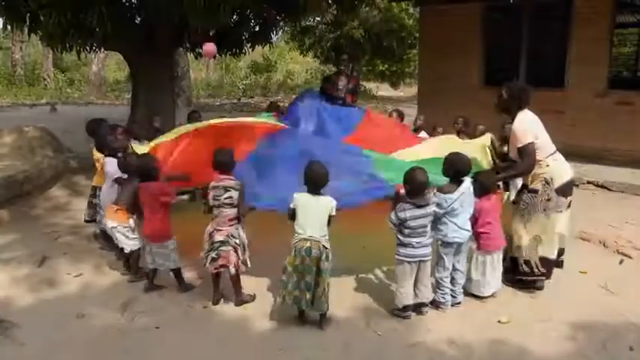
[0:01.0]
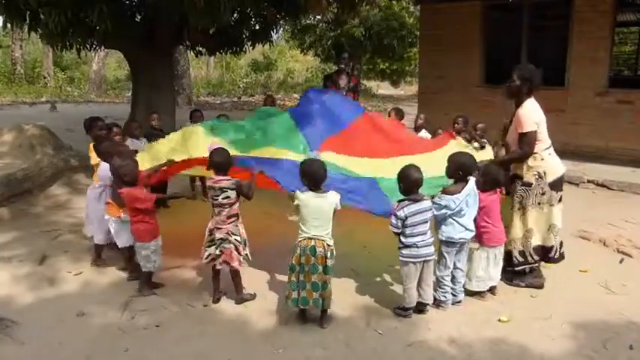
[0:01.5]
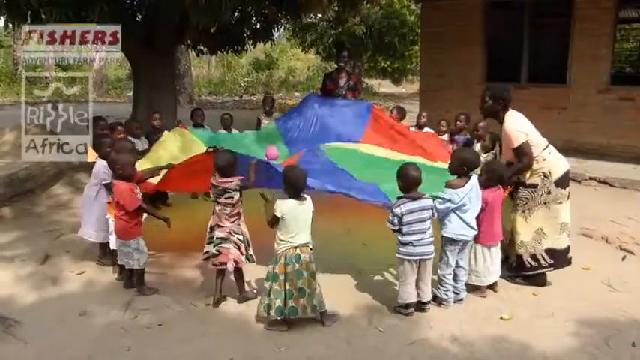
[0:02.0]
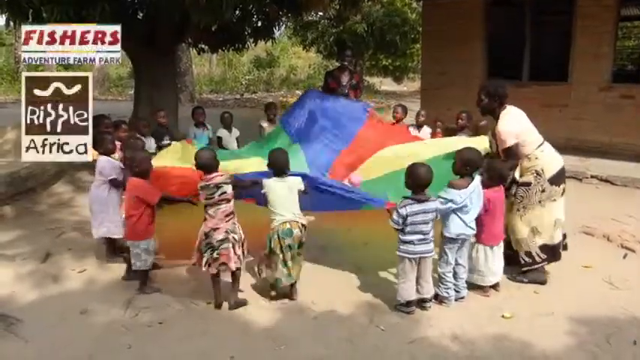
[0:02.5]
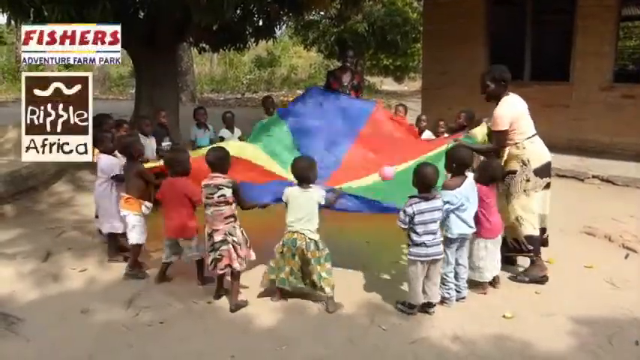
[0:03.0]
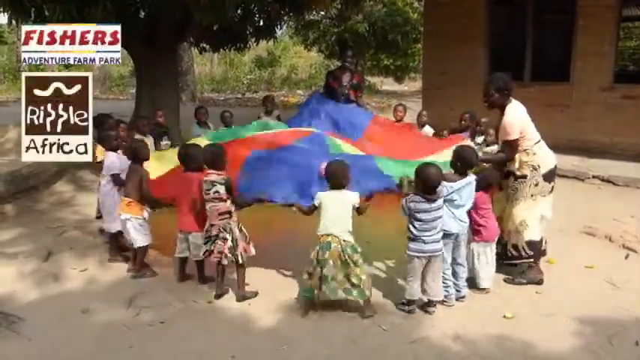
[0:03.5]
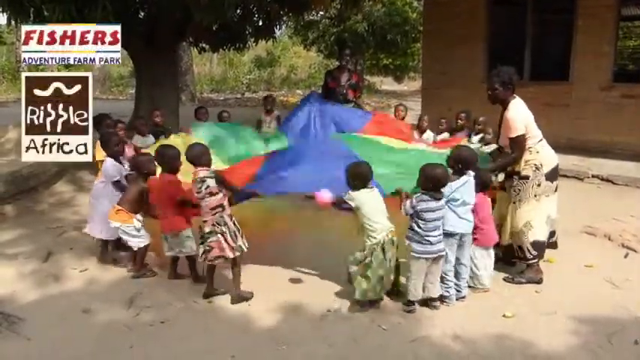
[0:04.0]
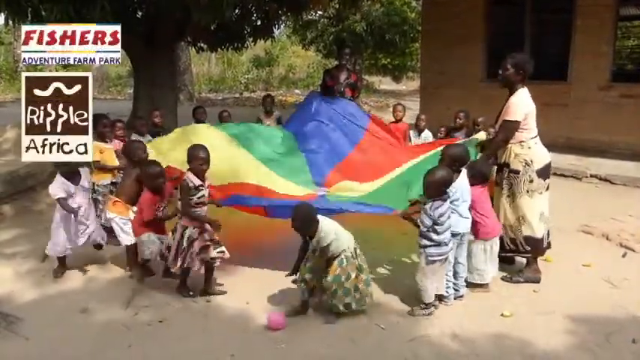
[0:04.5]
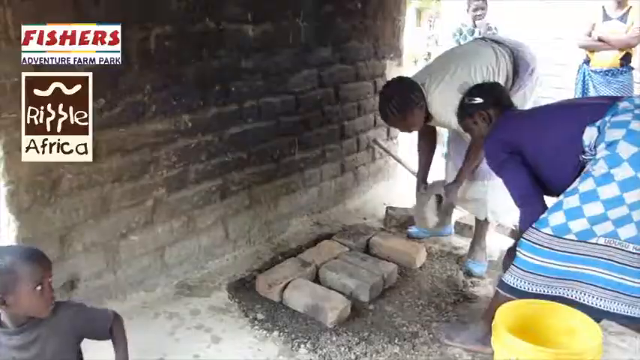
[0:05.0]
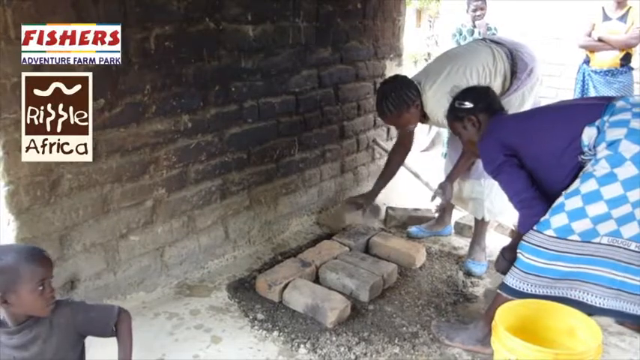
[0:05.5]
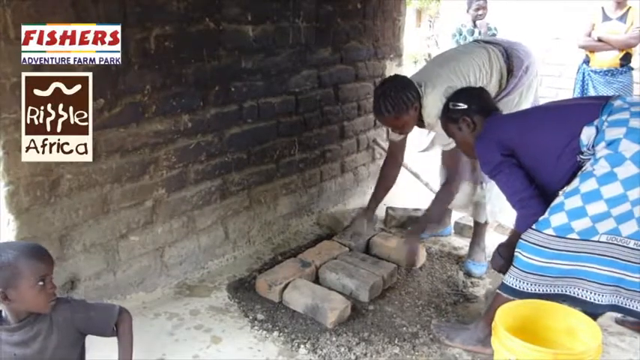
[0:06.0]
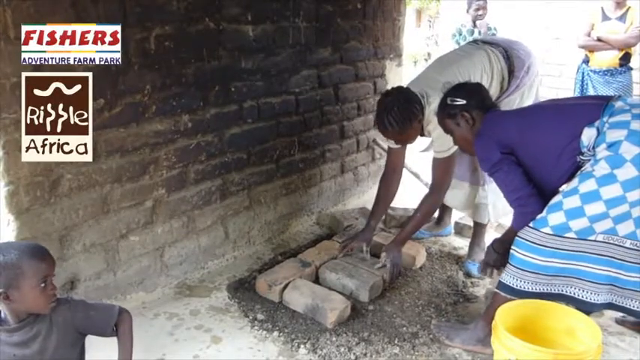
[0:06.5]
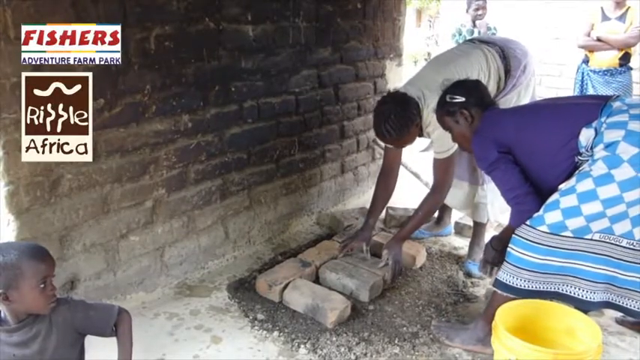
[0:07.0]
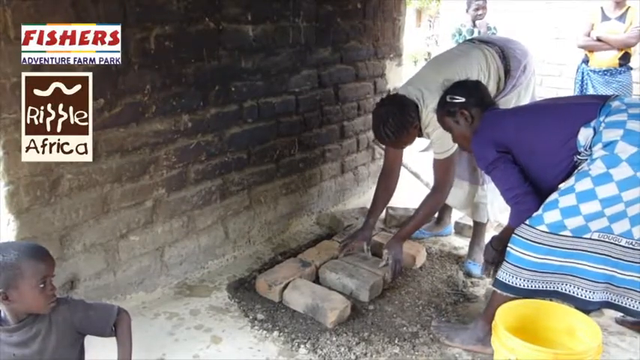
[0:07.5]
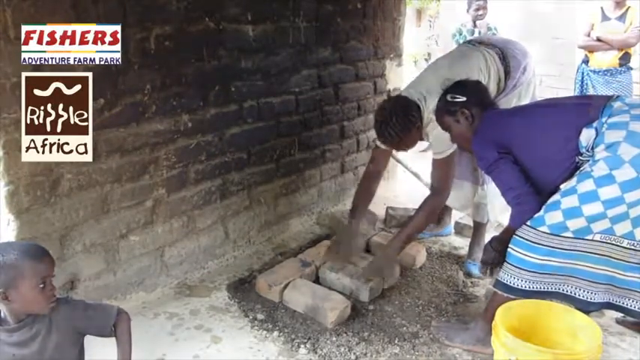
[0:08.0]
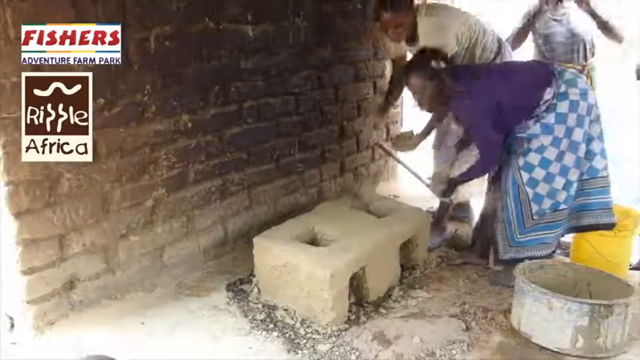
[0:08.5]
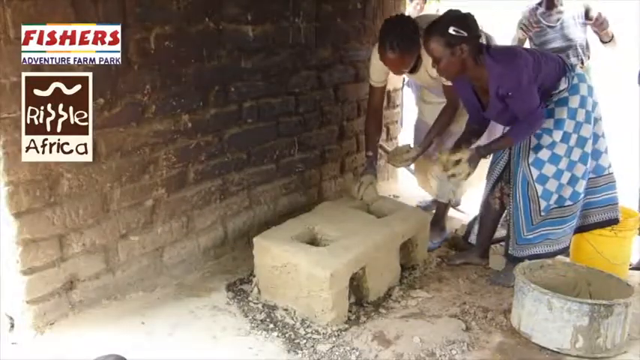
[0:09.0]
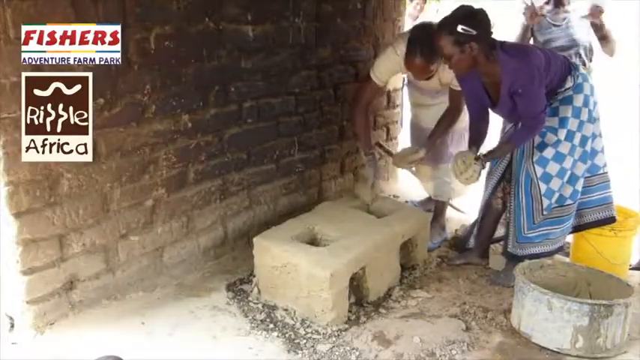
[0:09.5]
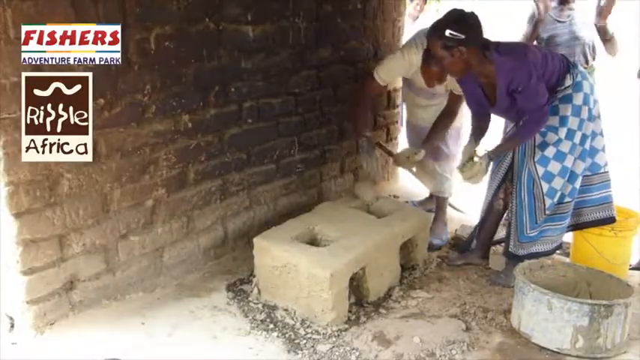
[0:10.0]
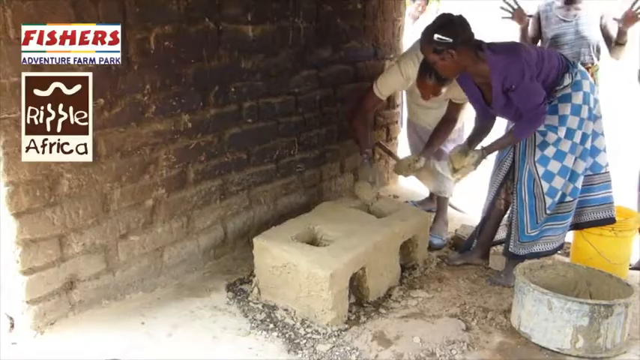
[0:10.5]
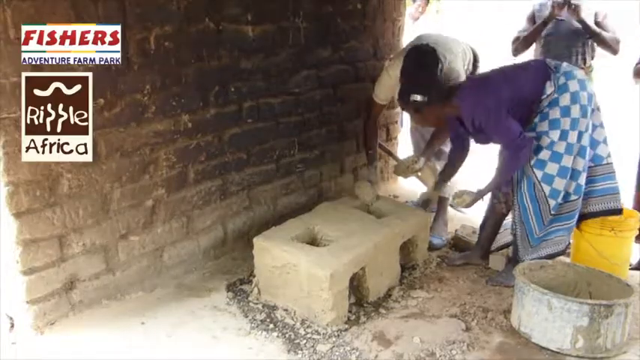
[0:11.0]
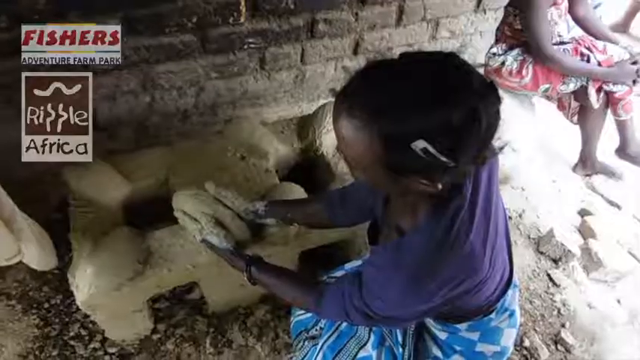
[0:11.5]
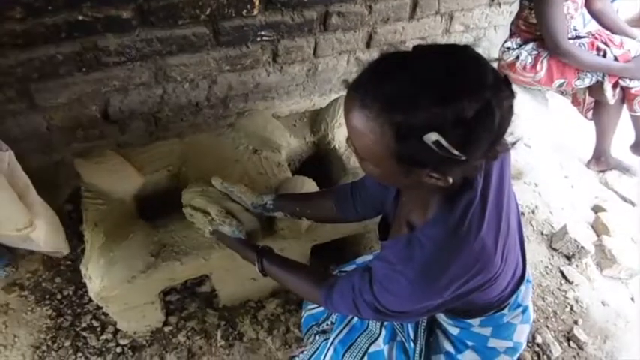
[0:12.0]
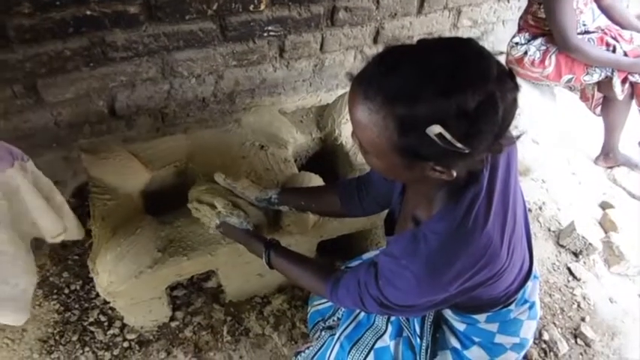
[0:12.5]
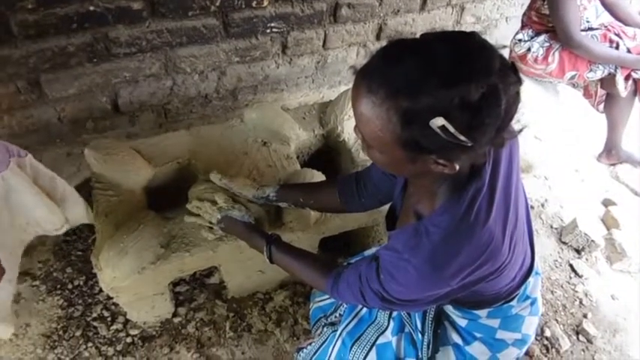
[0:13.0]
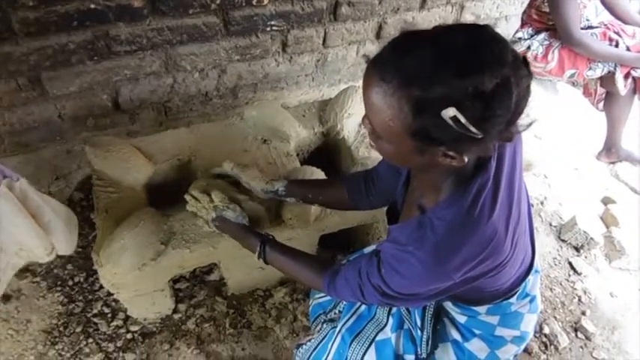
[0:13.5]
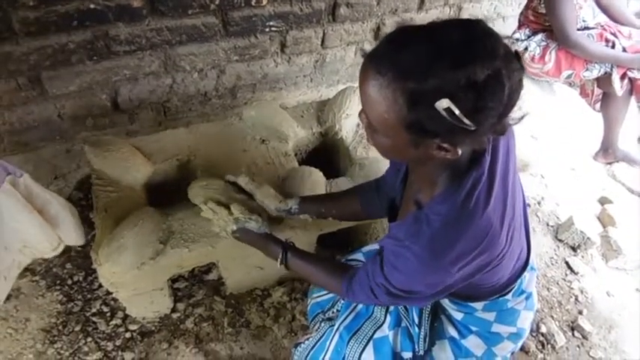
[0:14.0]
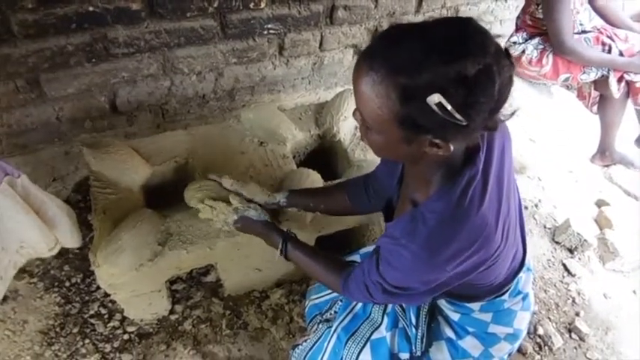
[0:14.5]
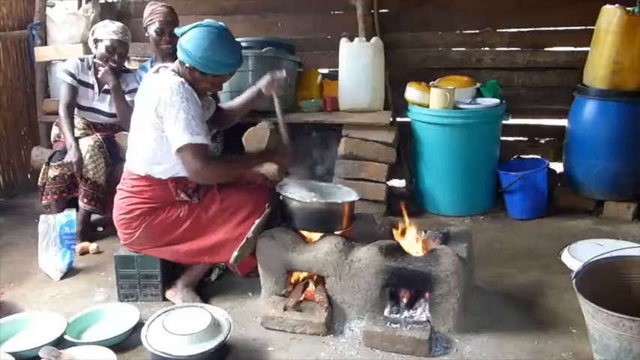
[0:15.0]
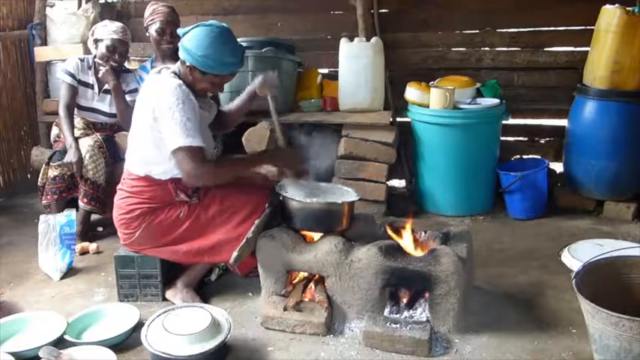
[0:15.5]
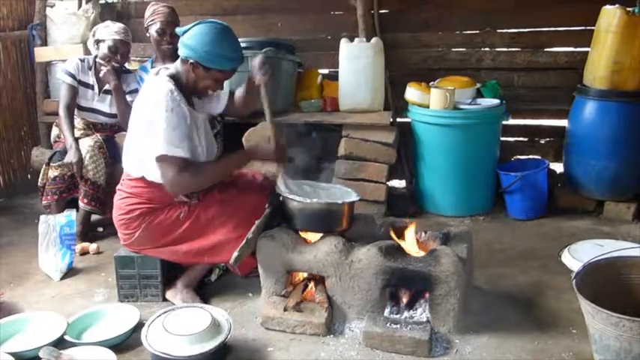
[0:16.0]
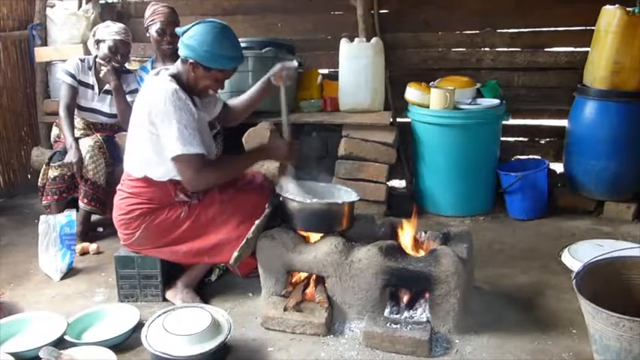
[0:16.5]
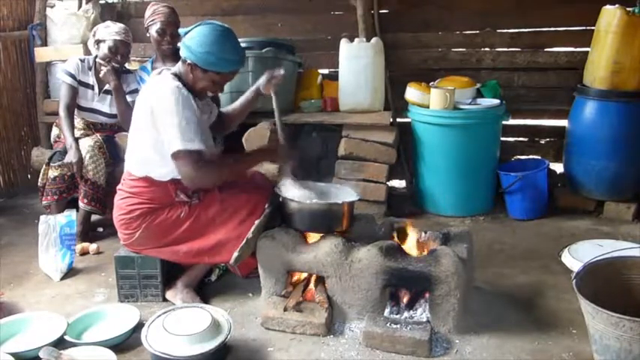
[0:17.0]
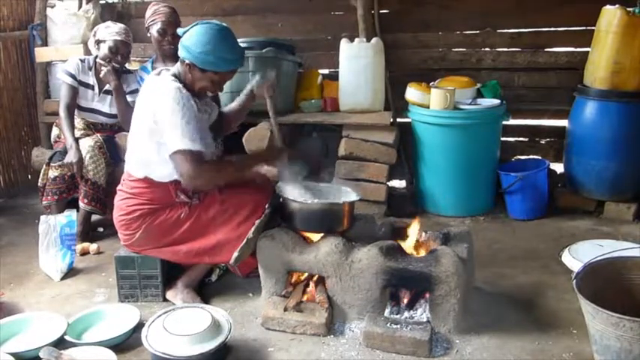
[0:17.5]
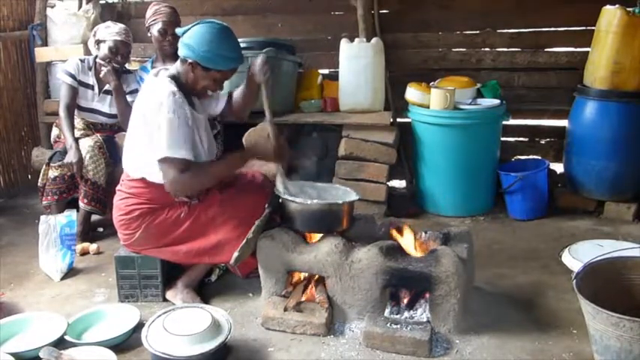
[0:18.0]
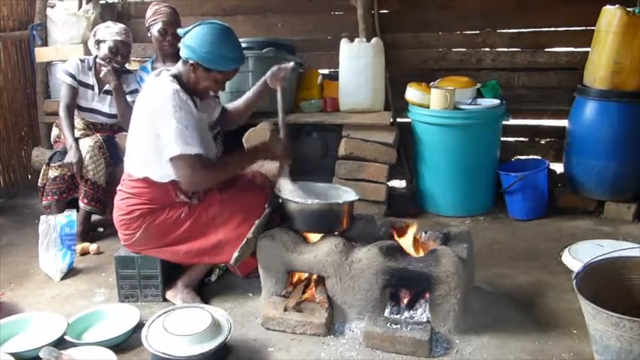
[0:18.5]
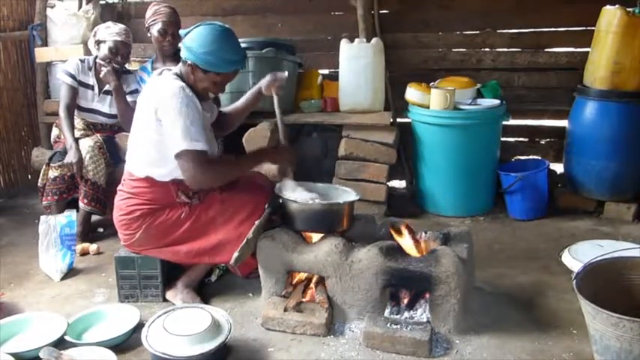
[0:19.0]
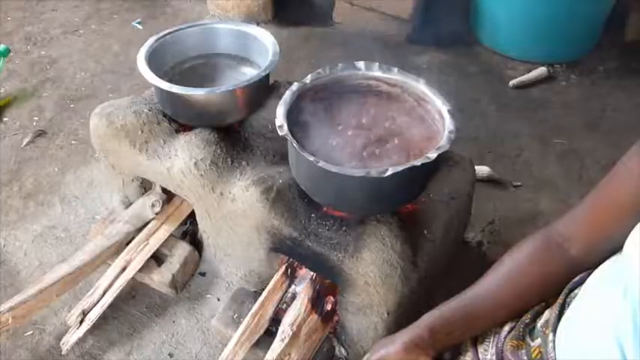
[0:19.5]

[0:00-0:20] A black background slowly fades into a group of children playing with what seems to be a large parachute, a long piece of cloth with many colours like a rainbow. They play in a circle, each holding a piece of the cloth, and a ball on the cloth bounces as they move it. The children all seem very happy and excited. Next, some teenagers seem to be building things with some kind of concrete, and over time they appear to be making an oven. The oven is then used by a woman for some kind of food preparation, which is shown being made over the ovens the teens built.